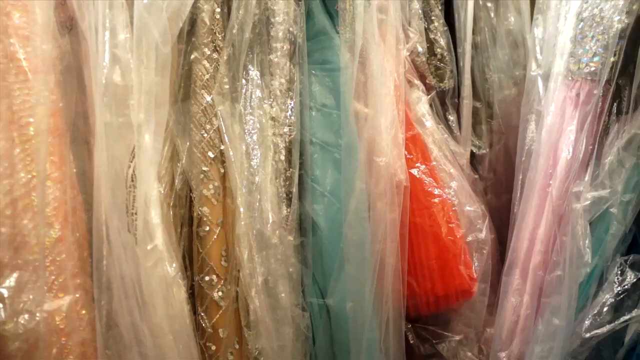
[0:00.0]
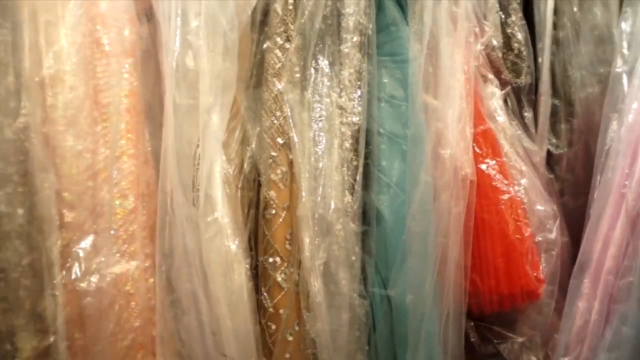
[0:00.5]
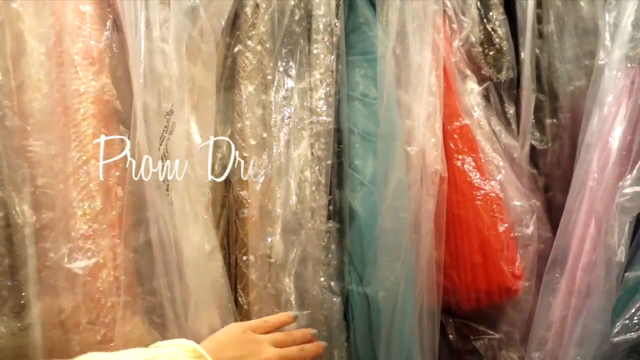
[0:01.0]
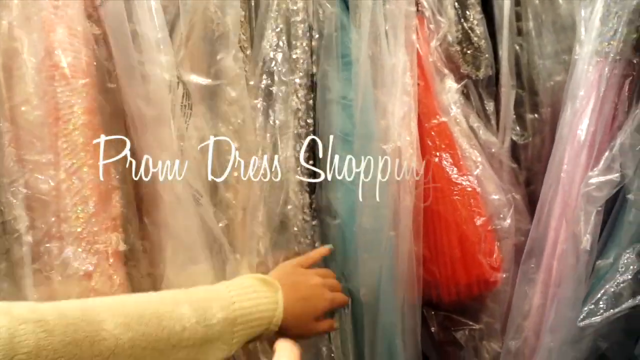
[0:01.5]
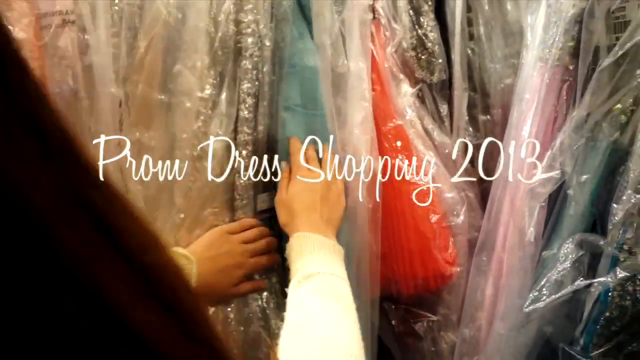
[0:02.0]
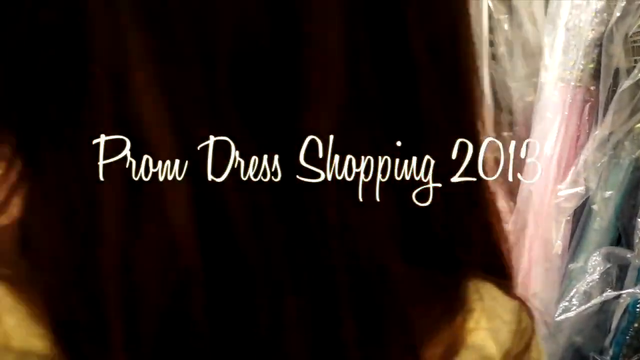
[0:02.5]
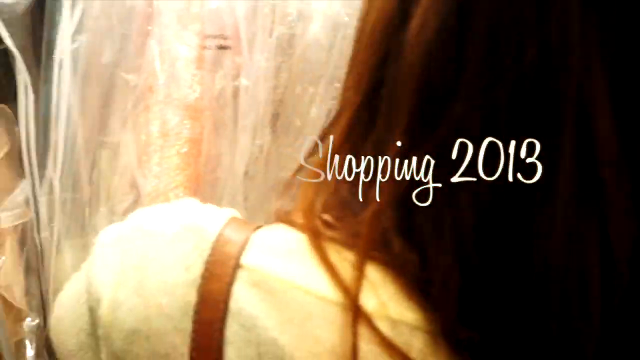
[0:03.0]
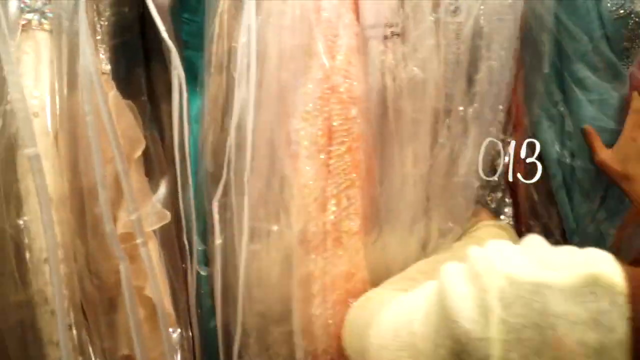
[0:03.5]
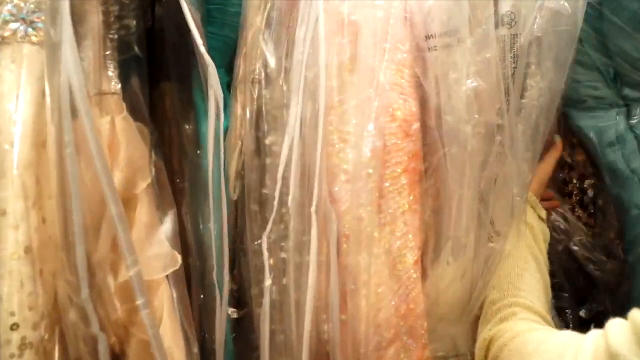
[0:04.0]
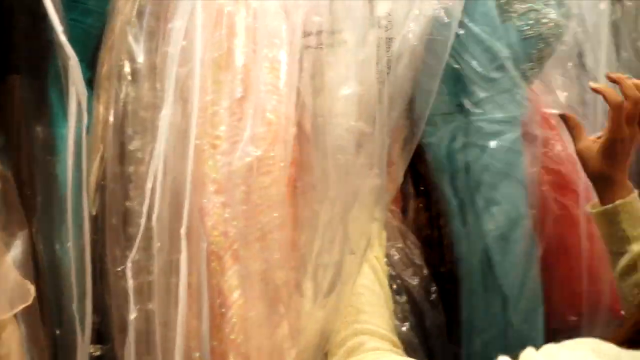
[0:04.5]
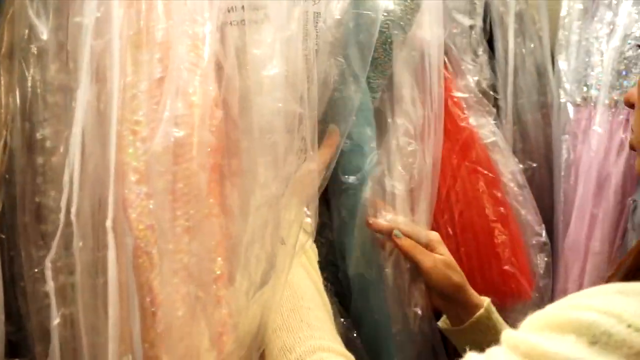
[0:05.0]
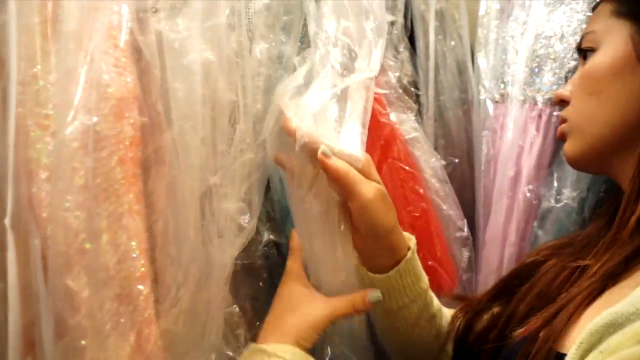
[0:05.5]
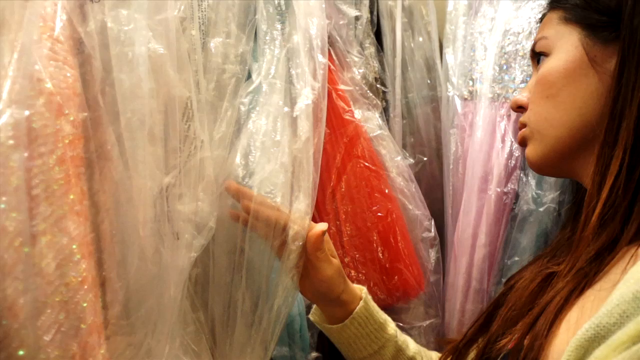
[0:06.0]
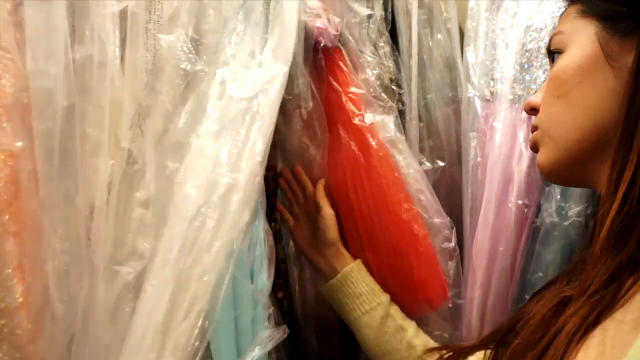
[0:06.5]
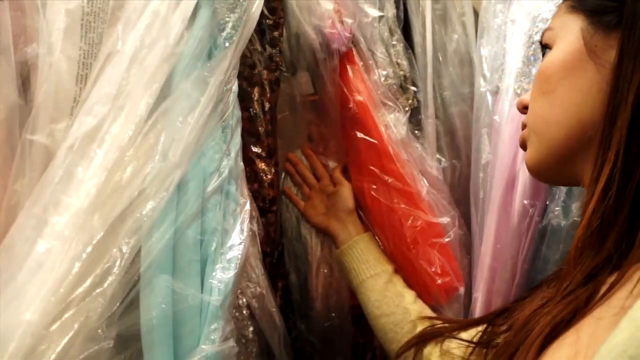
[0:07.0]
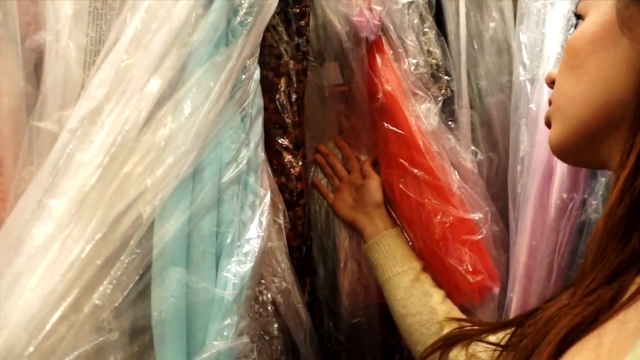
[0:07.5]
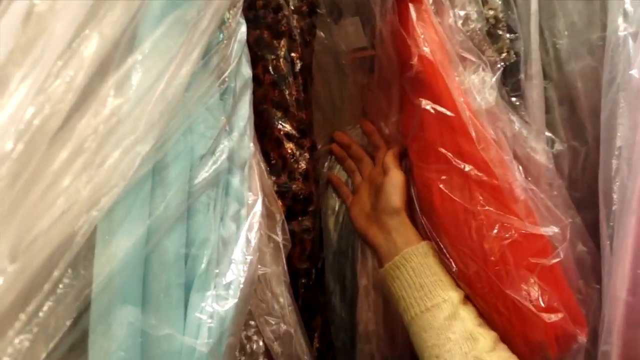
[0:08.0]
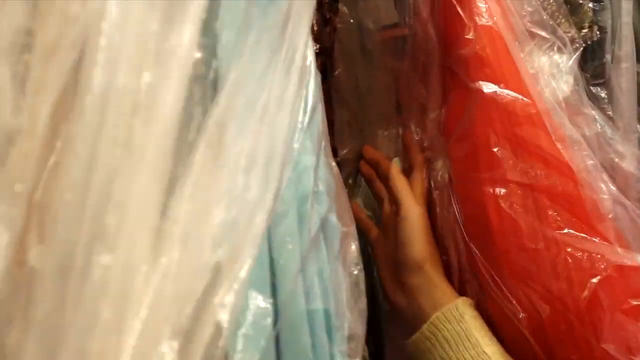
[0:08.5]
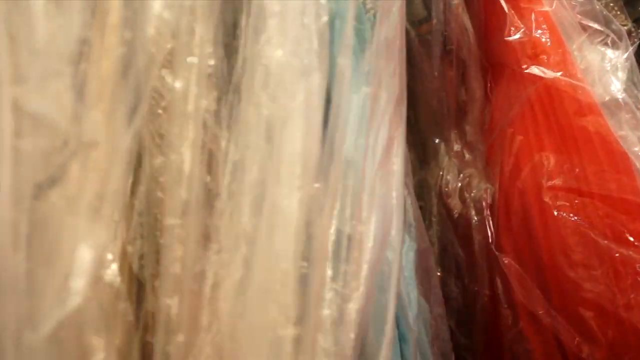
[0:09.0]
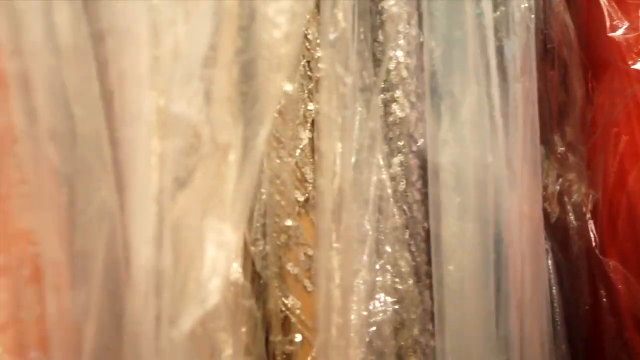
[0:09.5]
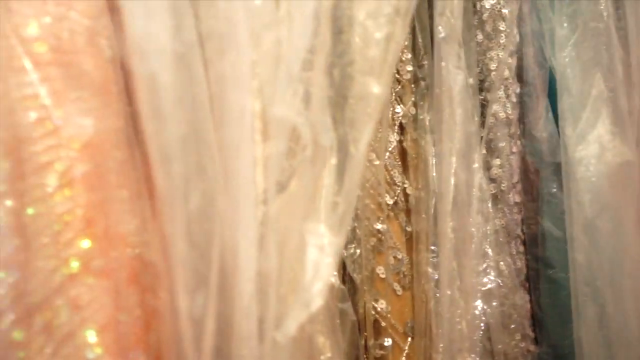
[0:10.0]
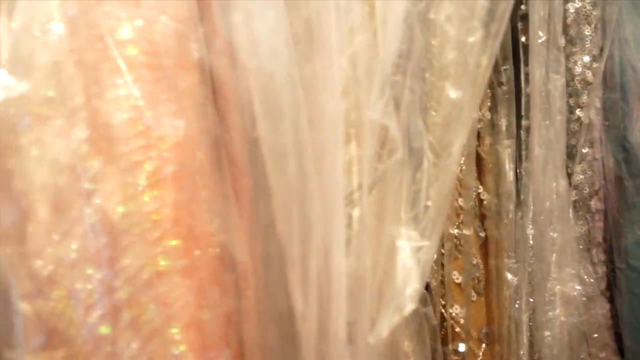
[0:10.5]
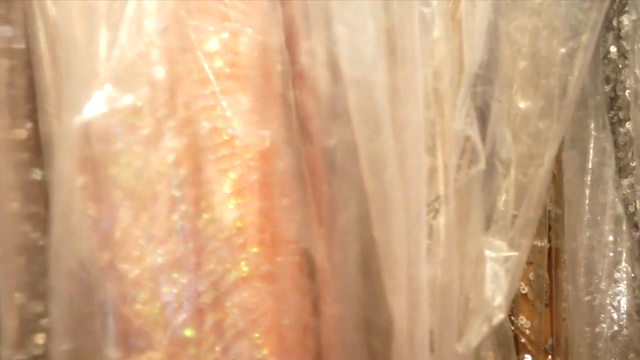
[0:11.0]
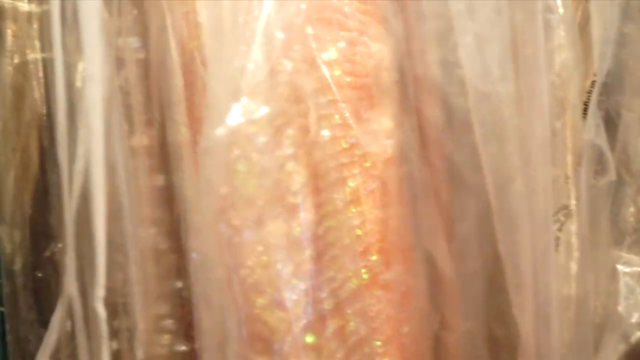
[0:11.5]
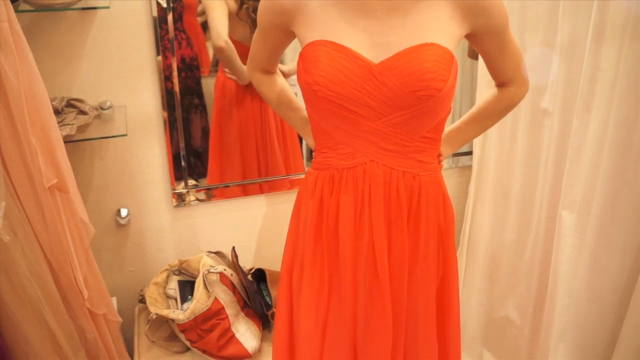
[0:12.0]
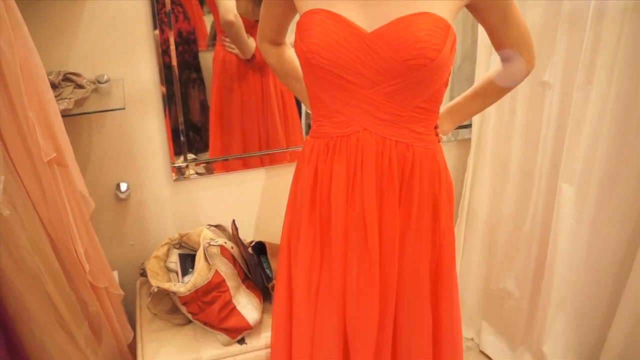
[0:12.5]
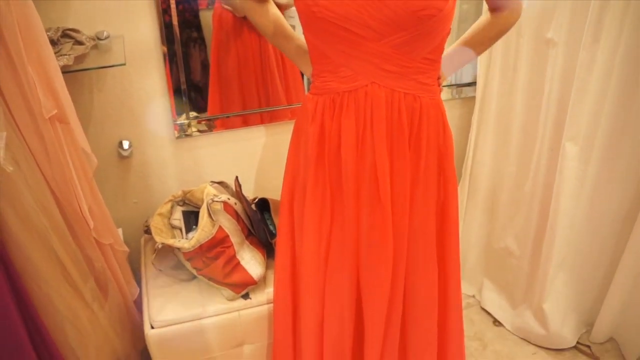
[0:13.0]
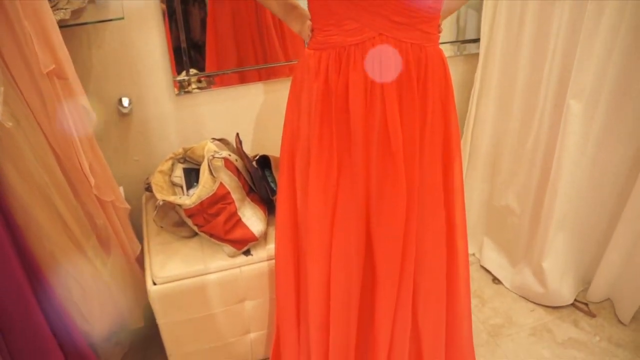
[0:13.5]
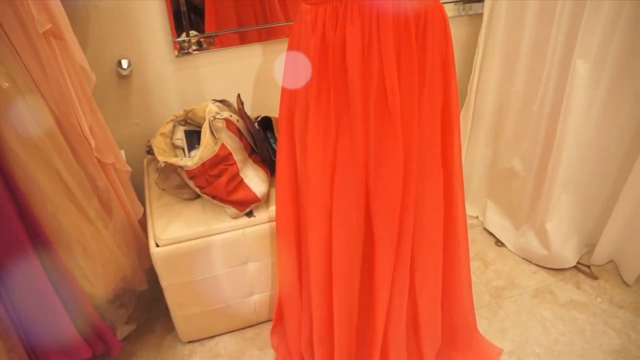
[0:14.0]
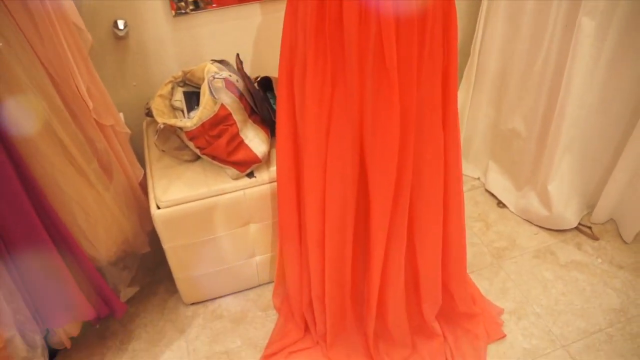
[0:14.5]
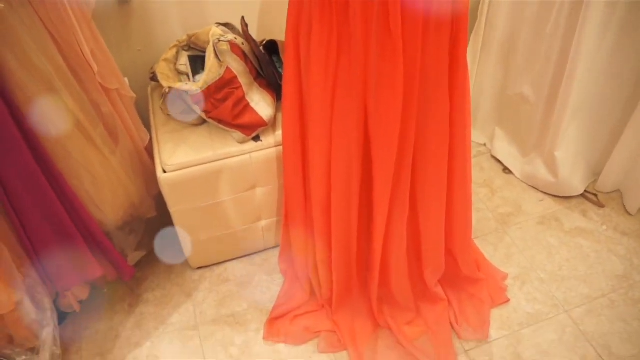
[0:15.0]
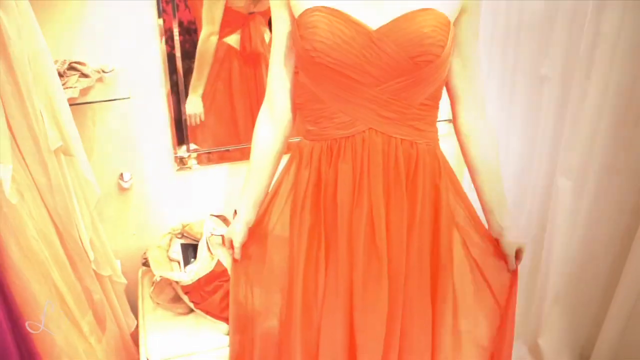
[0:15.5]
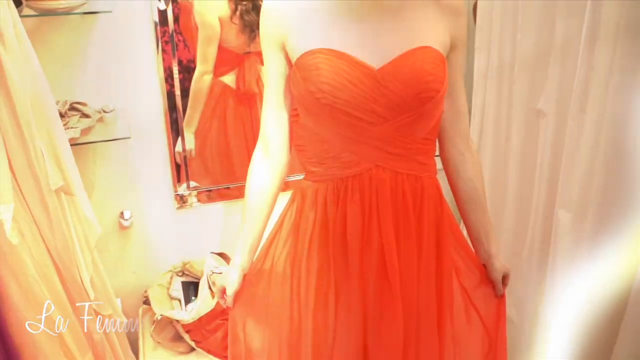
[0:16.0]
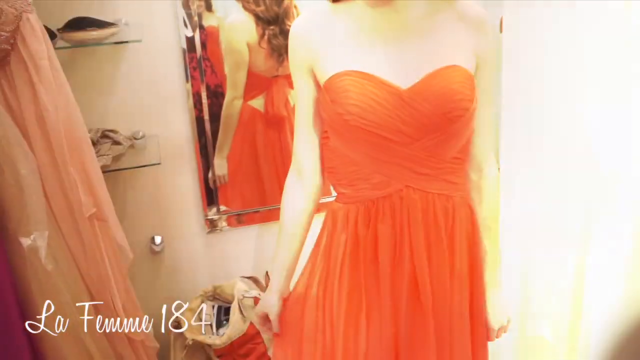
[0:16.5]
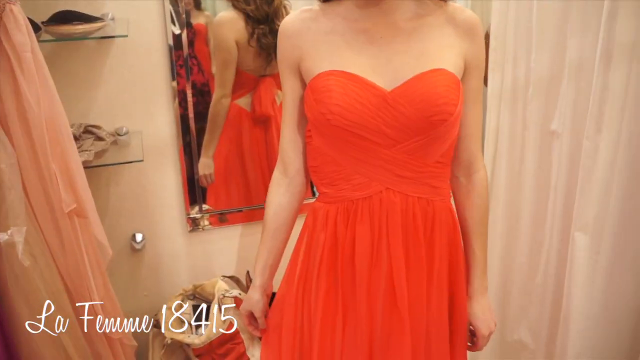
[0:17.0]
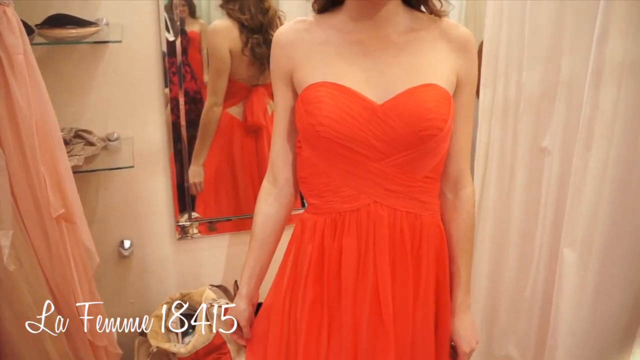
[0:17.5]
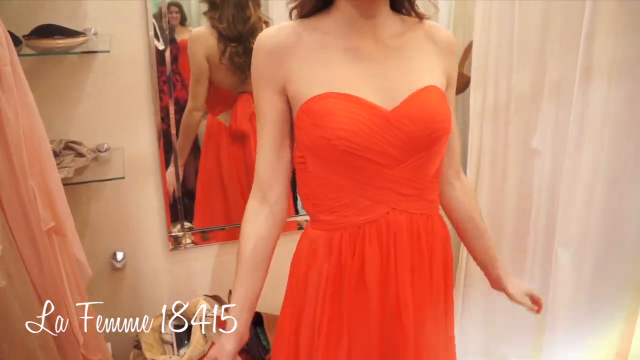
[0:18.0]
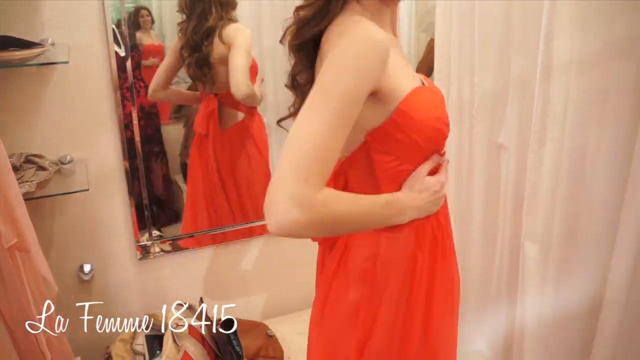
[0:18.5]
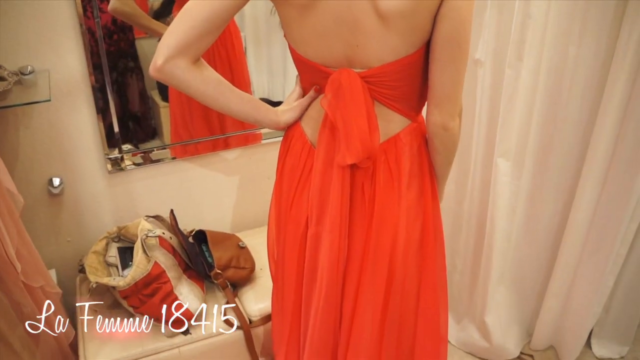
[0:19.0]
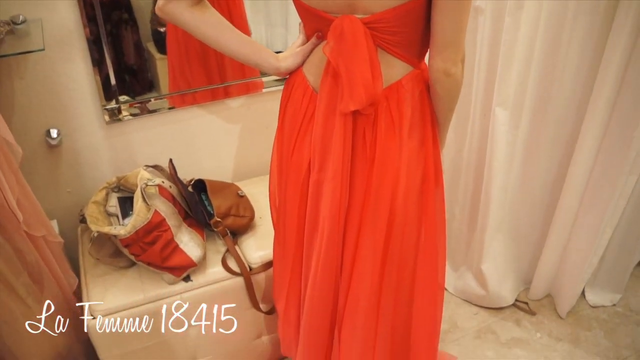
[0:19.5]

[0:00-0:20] Clothes hang in clear plastic, in colors like green, orange, pink, white and gold. As the camera pans, white text pops up superimposed over the footage reading "prom dress shopping 2013". A woman with maybe brownish or red hair goes through the racks of clothes, and a brown purse strap is visible. She wears a goldish-colored shirt as she flips through the outfits. She looks at something teal blue, and then the camera pans to the left to show a lady in an orange prom dress, apparently trying it on. A mirror may be visible in the background of this dressing room. The camera pans up and down without showing her face. A brown purse is visible.